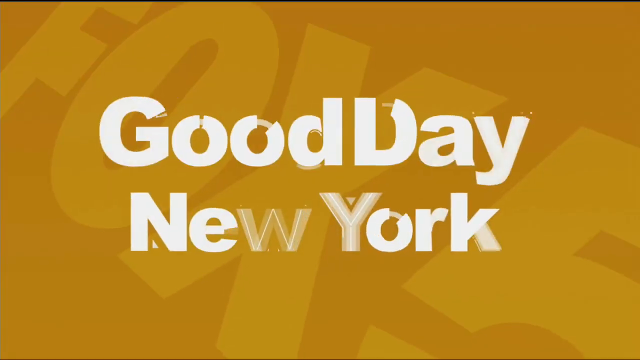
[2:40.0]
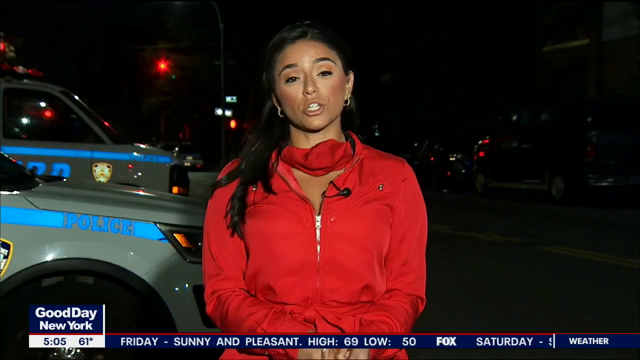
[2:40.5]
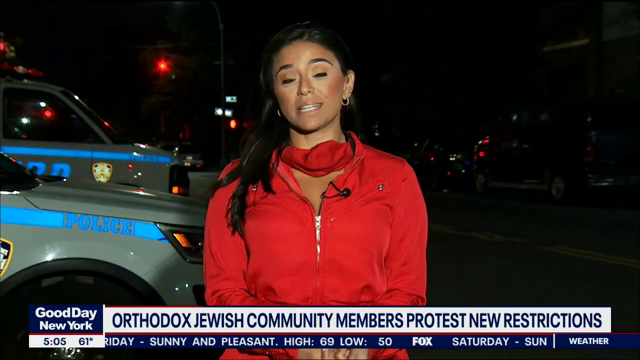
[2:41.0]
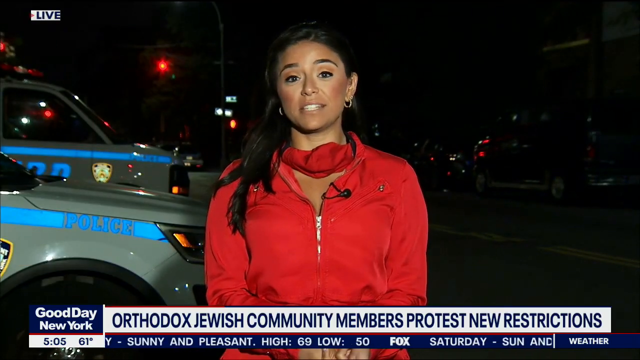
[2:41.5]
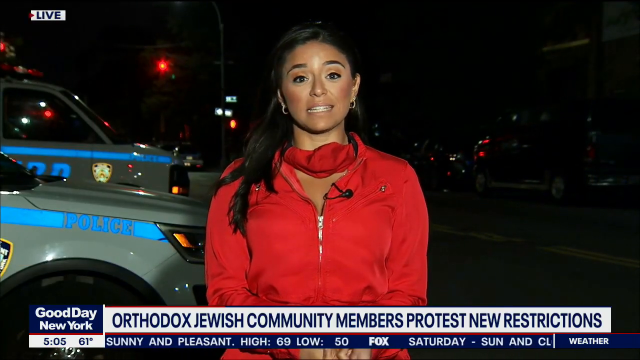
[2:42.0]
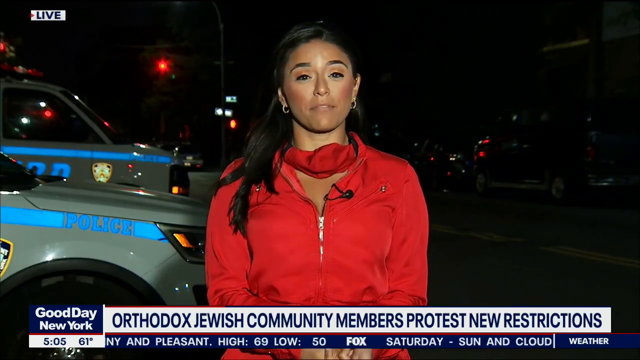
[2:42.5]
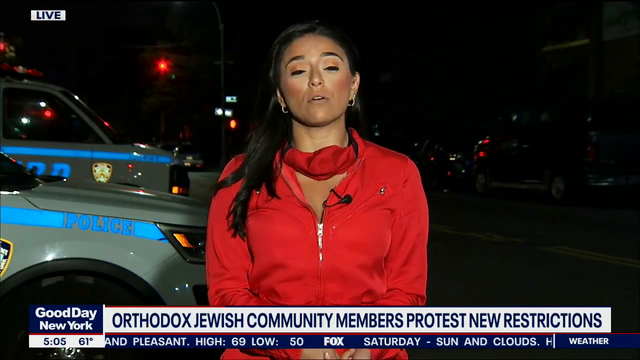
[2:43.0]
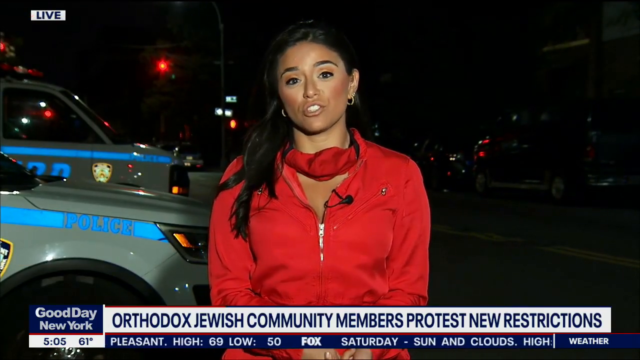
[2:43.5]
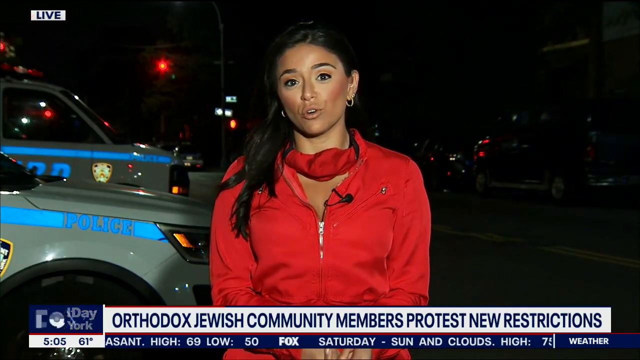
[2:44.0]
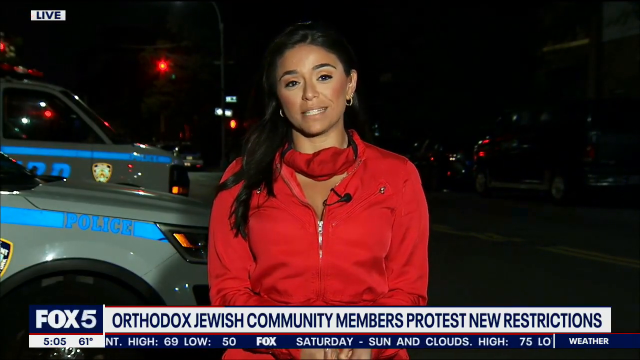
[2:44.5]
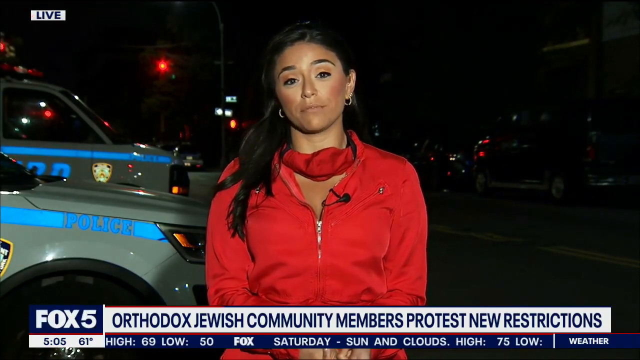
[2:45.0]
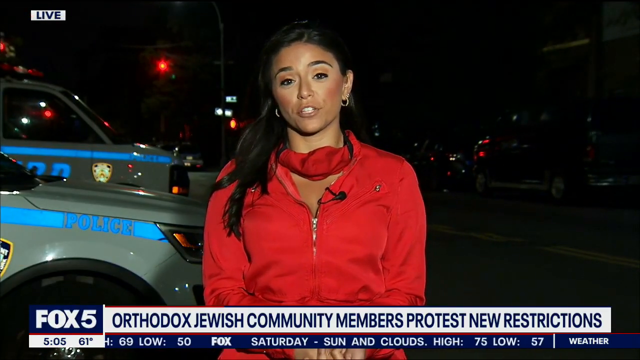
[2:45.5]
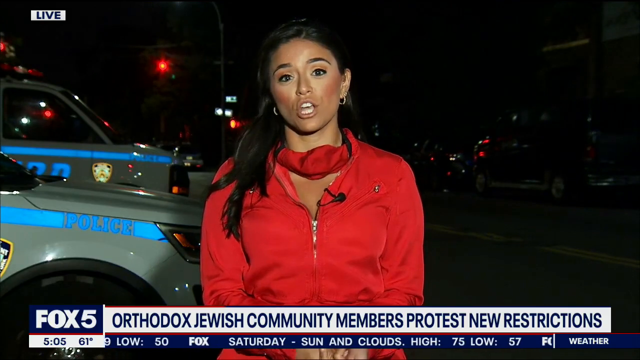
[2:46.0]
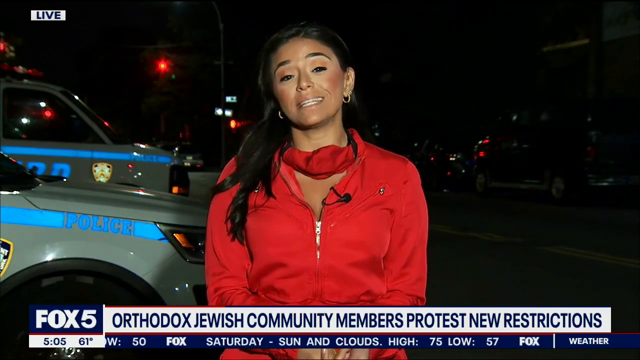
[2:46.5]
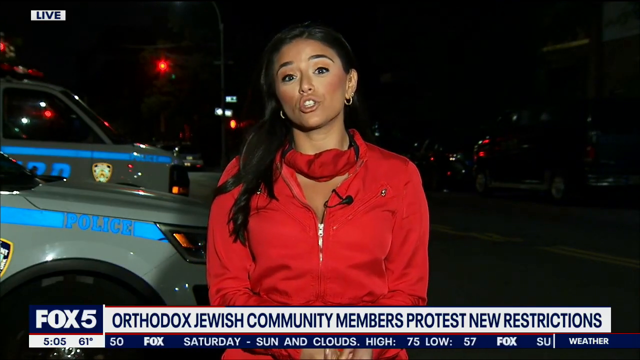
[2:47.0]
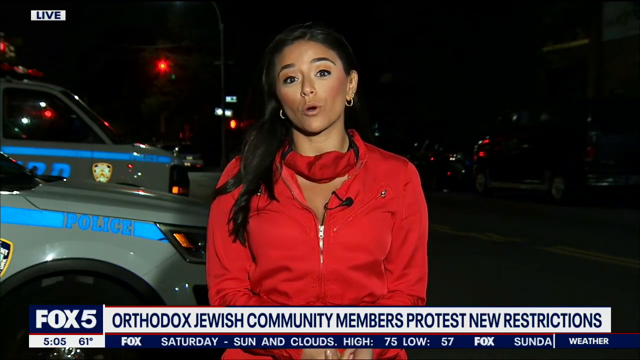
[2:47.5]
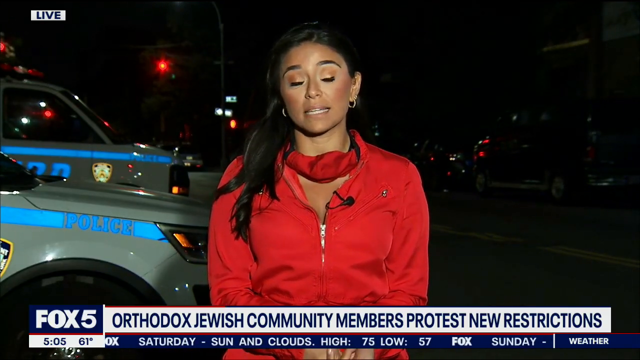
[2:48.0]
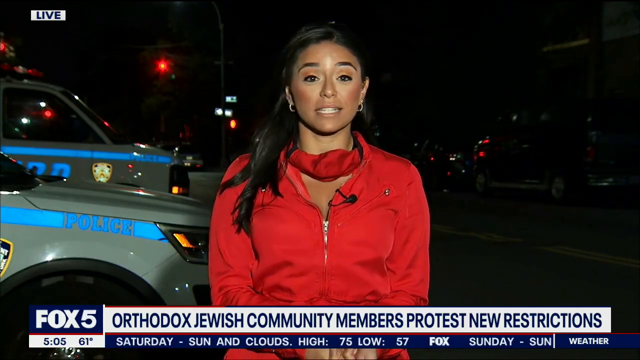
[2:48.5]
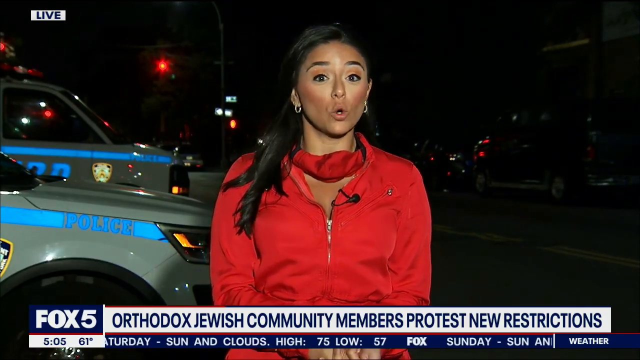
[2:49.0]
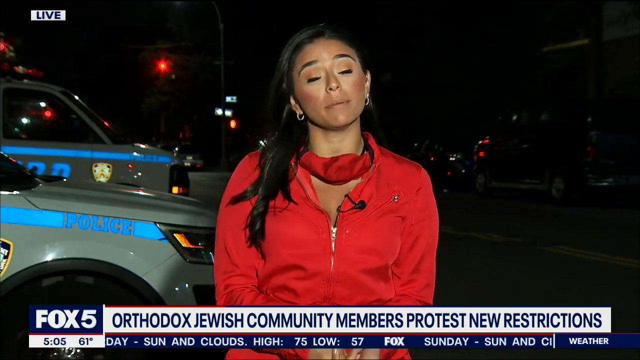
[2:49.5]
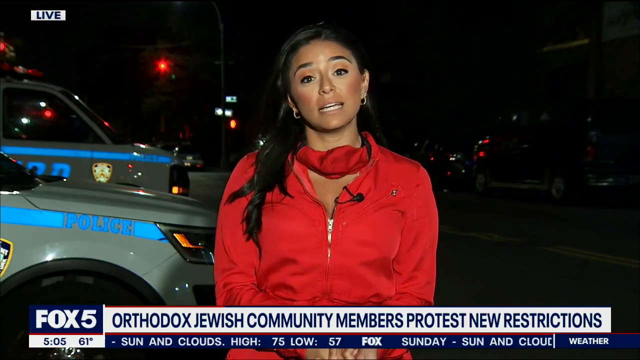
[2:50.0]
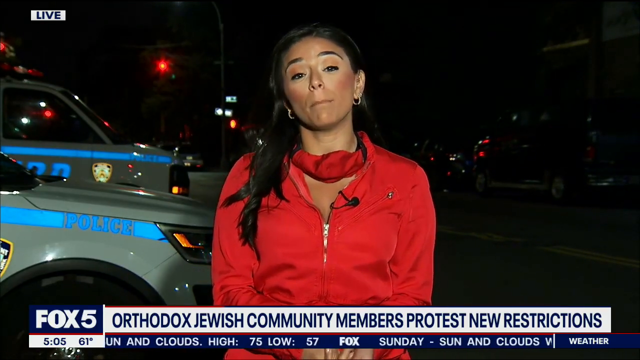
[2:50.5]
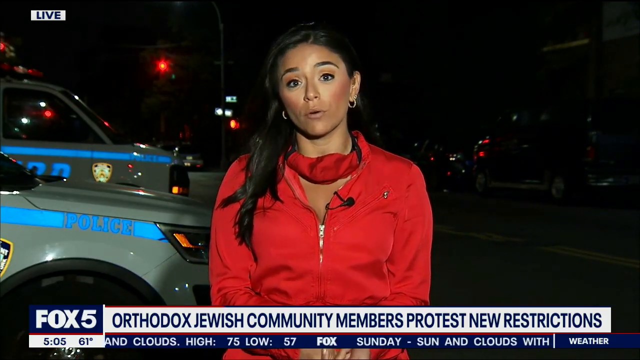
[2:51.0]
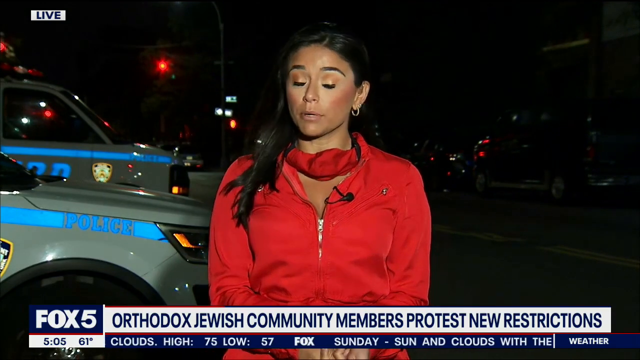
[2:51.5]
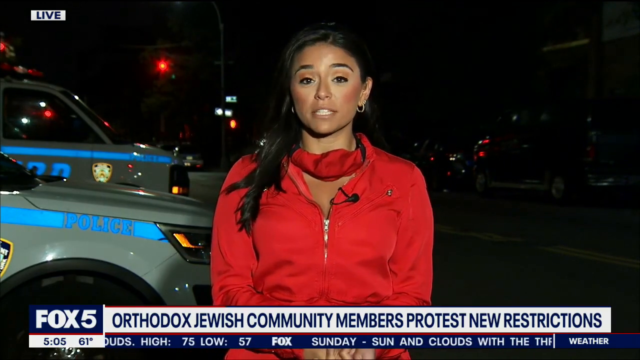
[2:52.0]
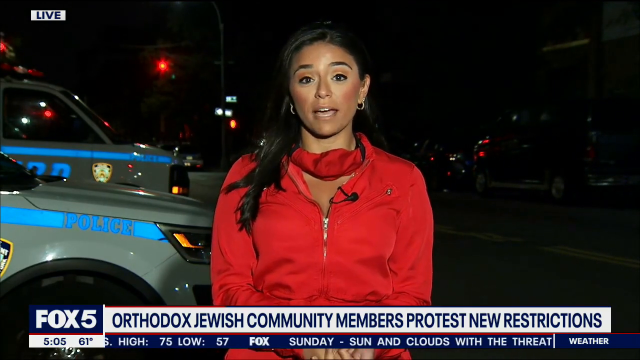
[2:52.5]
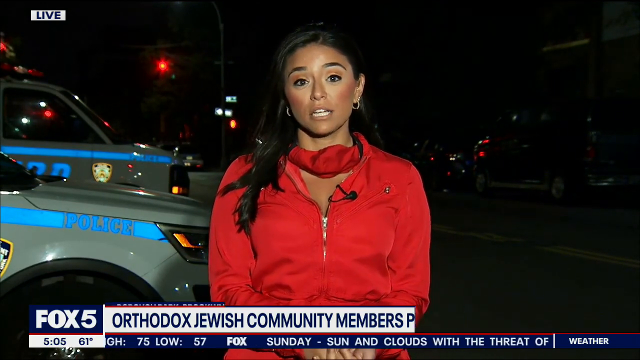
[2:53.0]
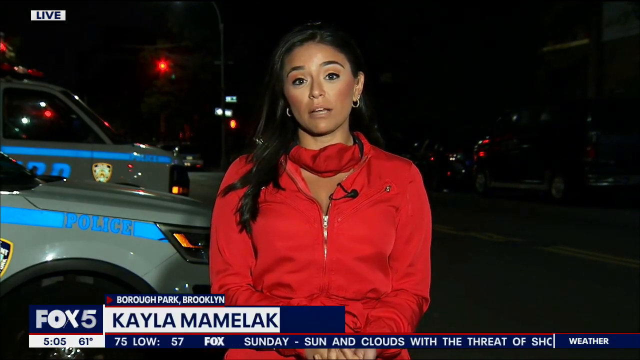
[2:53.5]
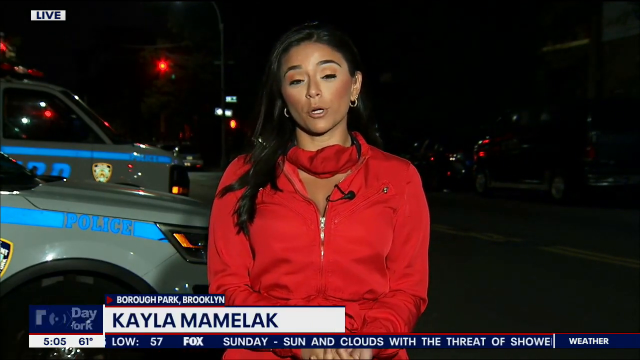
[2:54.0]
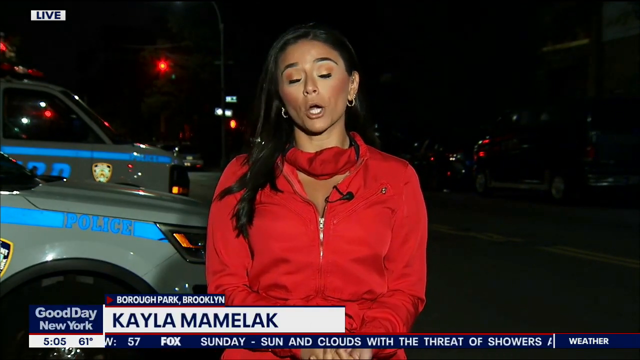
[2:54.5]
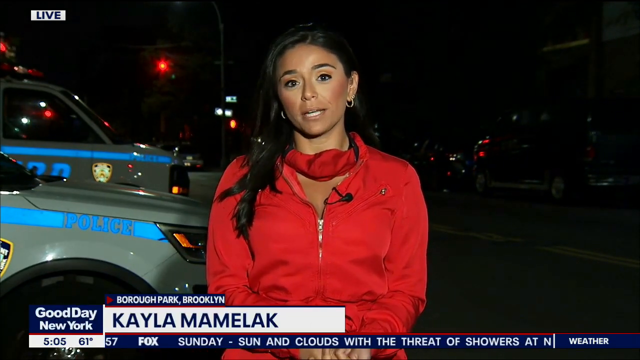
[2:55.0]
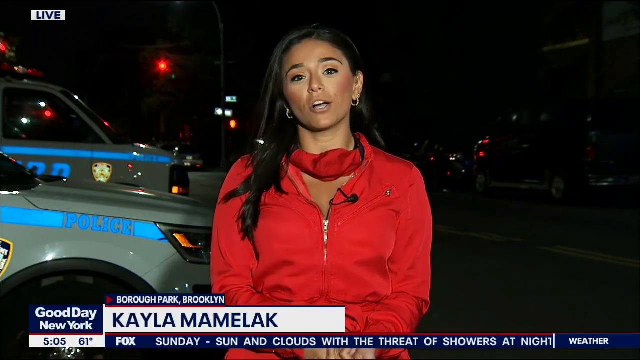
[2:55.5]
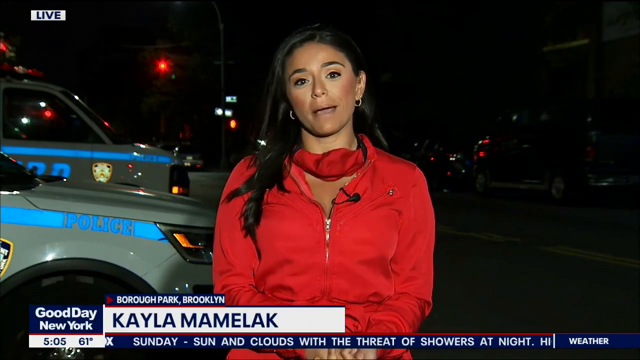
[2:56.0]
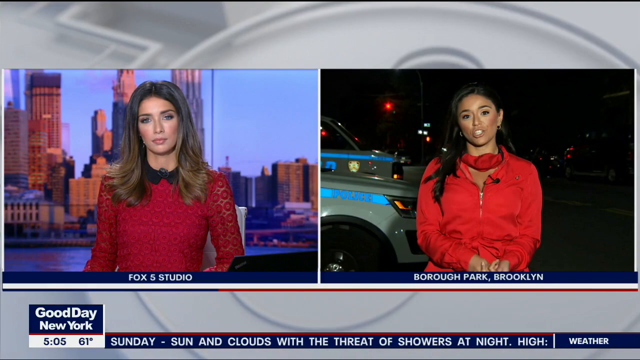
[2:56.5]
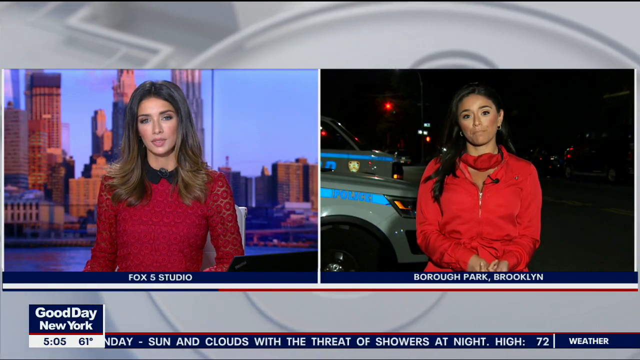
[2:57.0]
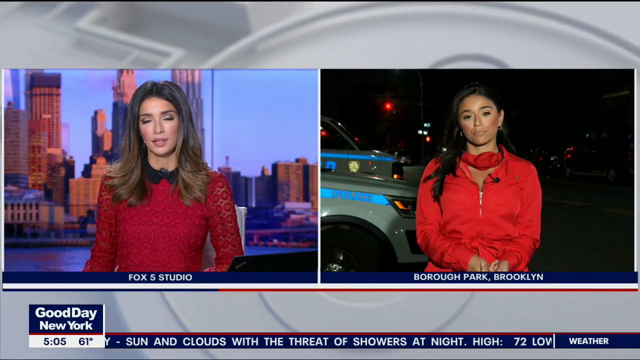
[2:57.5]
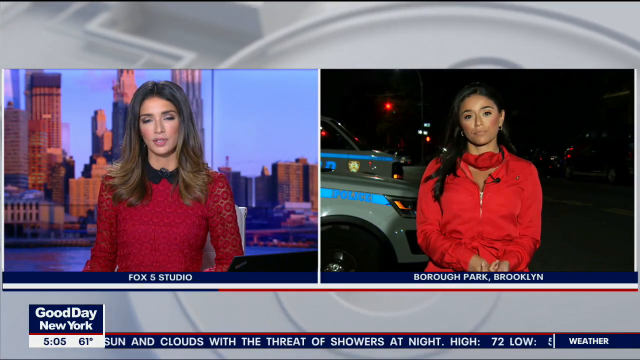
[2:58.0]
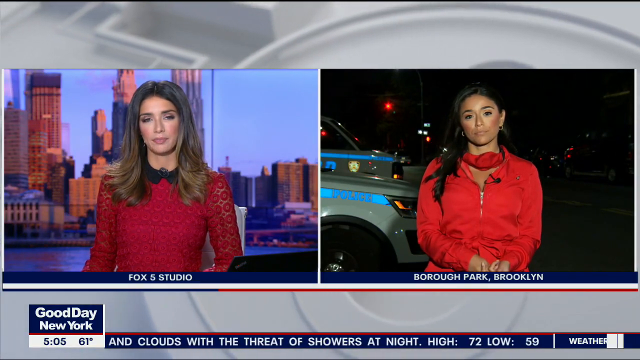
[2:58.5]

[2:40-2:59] The screen changes to yellow with the Fox logo in the background, and white text reading "Good Day New York" appears in the centre. The video returns to the reporter on scene, who looks at the camera, shakes her head and leans forward as she speaks, staring directly into the camera. She nods, looks down briefly before returning her gaze to the camera, and continues to move her head up and down as she speaks, occasionally glancing down. The image zooms out to a split screen with a reporter on the left and the woman on site on the right. The woman on the left is a new reporter not seen previously: she wears a red top with a black collar that has a microphone attached, and has brown, shoulder-length hair. She sits at a desk with the skyscraper image in the background. The two women speak to each other, and the video cuts out with both staring directly down the lens of the cameras.